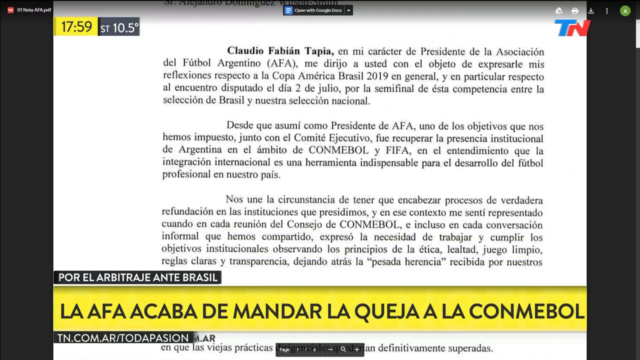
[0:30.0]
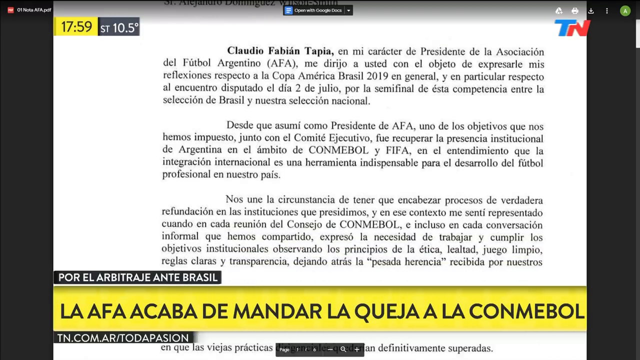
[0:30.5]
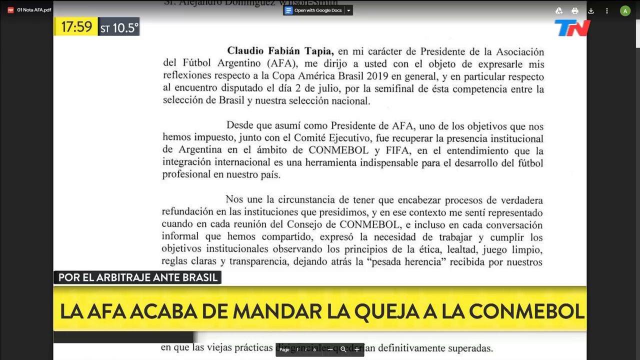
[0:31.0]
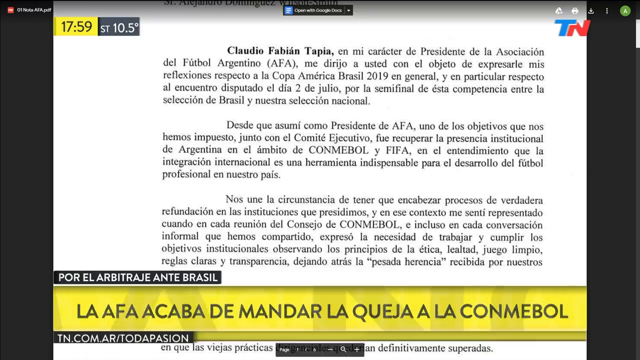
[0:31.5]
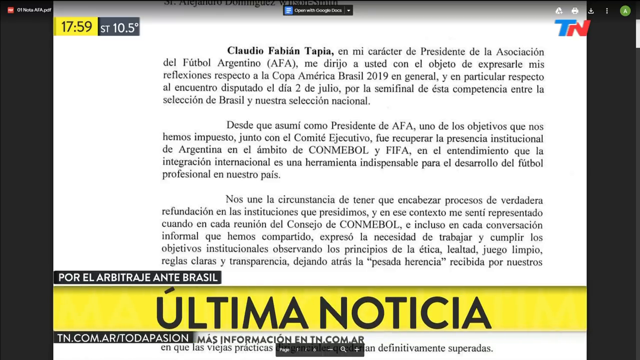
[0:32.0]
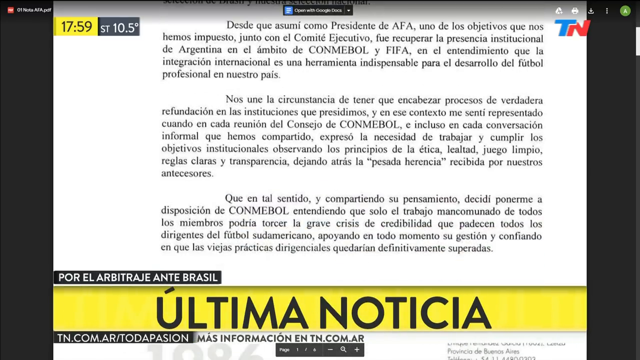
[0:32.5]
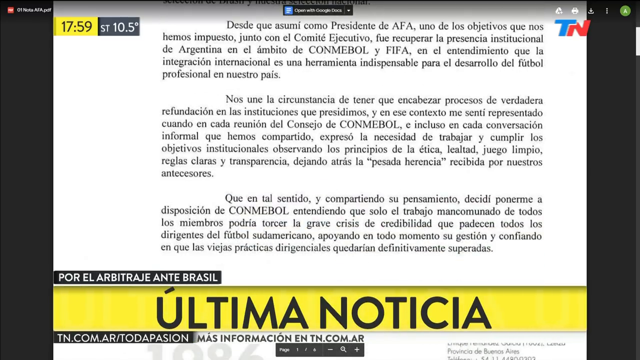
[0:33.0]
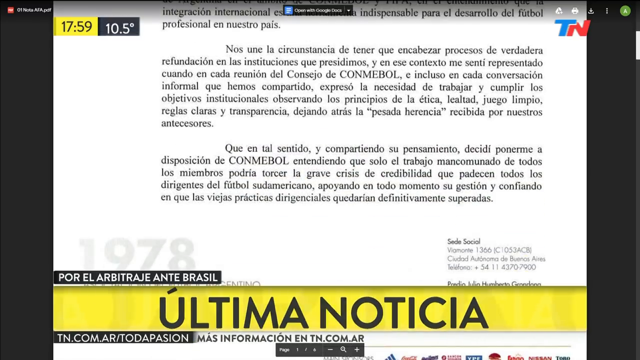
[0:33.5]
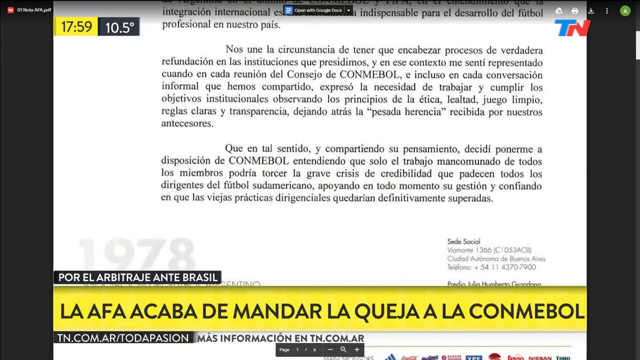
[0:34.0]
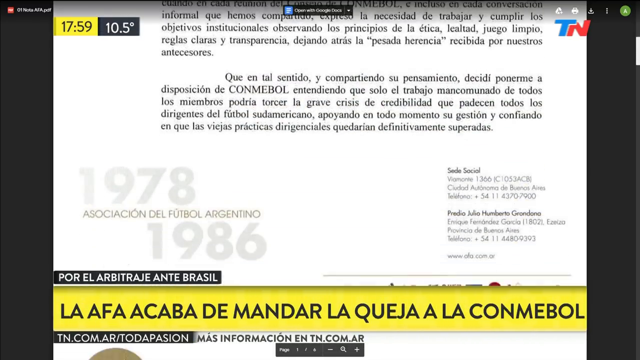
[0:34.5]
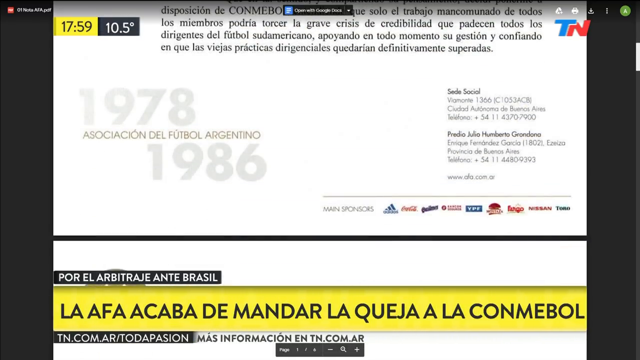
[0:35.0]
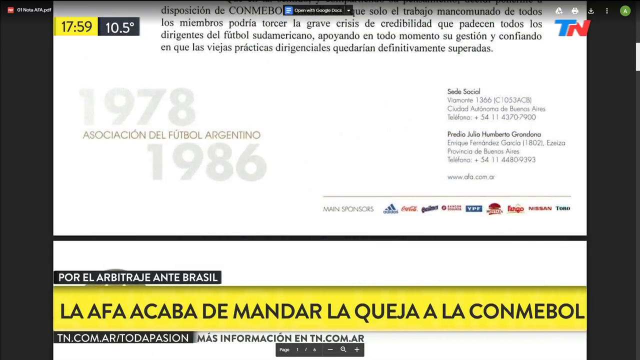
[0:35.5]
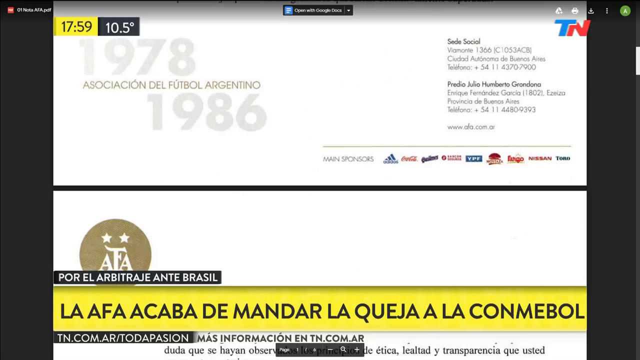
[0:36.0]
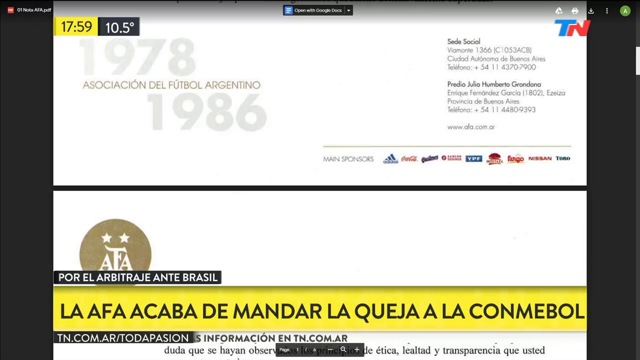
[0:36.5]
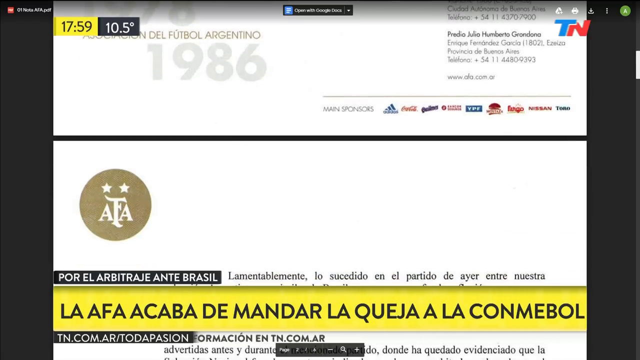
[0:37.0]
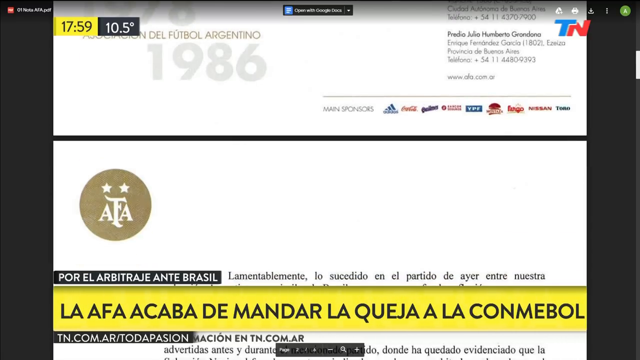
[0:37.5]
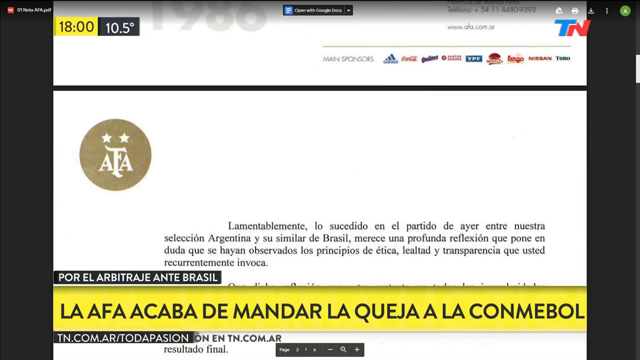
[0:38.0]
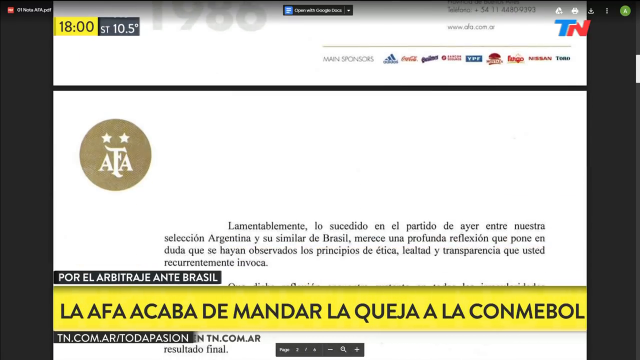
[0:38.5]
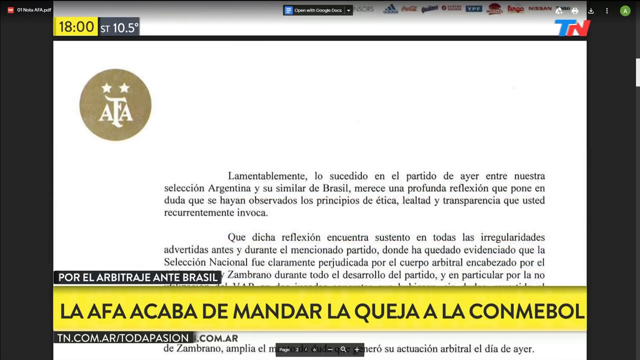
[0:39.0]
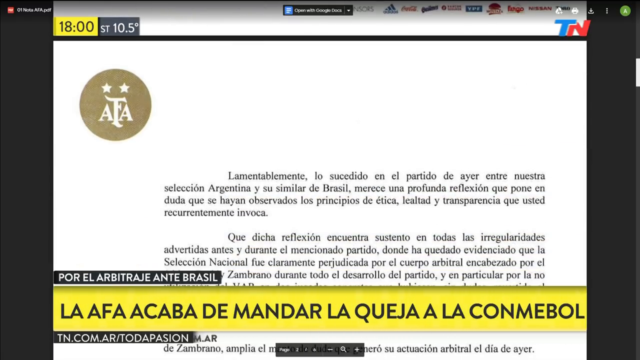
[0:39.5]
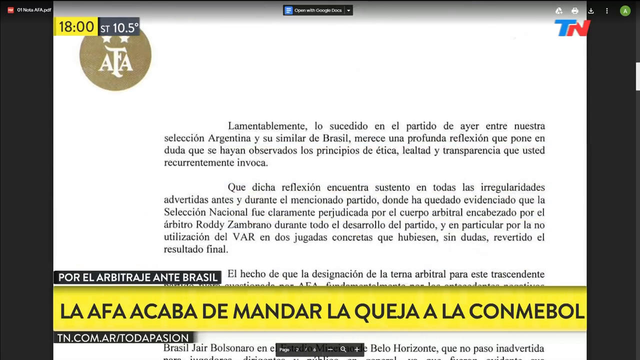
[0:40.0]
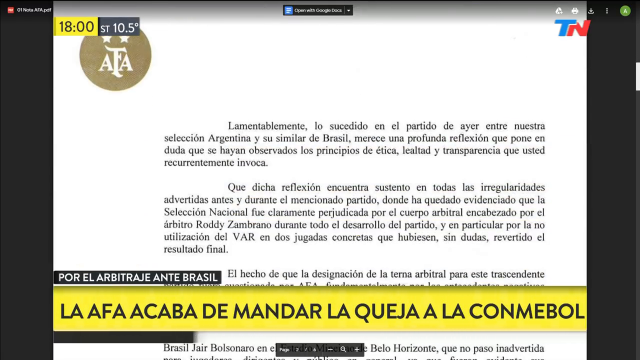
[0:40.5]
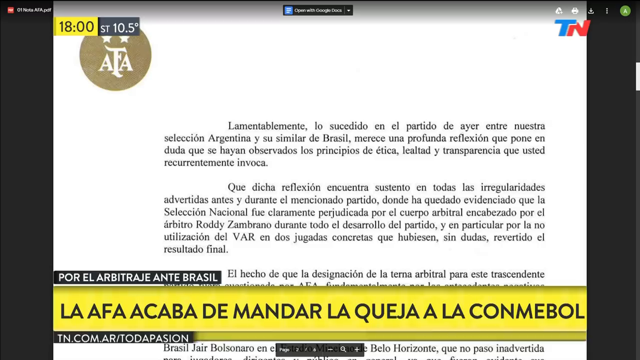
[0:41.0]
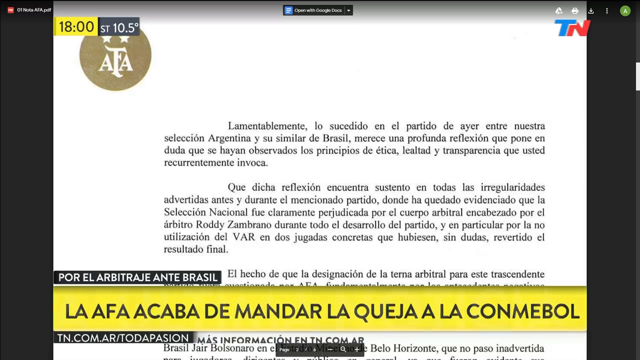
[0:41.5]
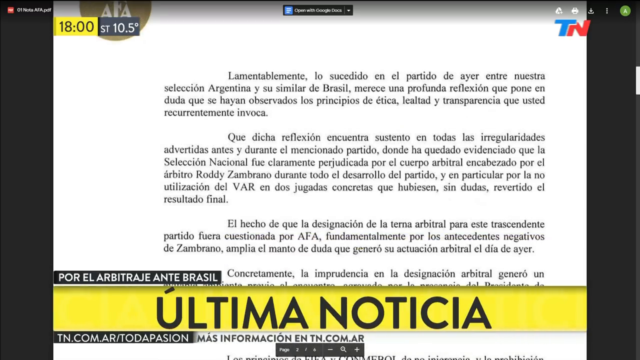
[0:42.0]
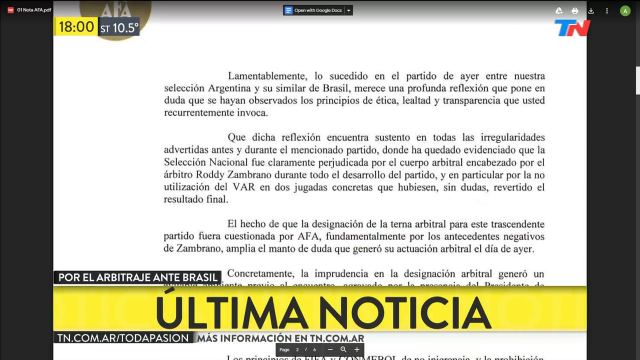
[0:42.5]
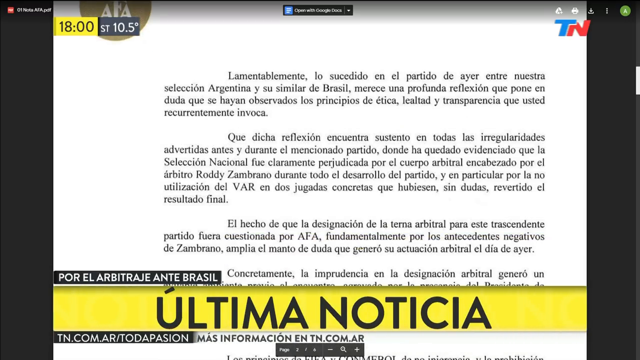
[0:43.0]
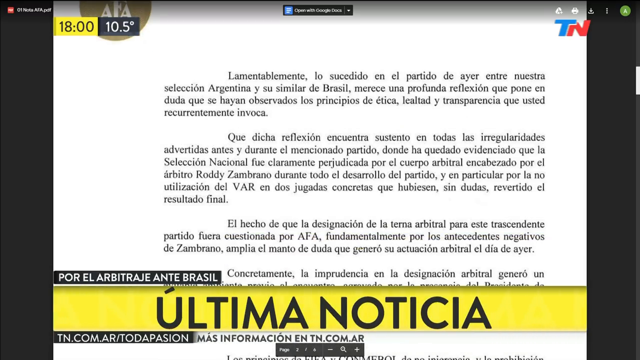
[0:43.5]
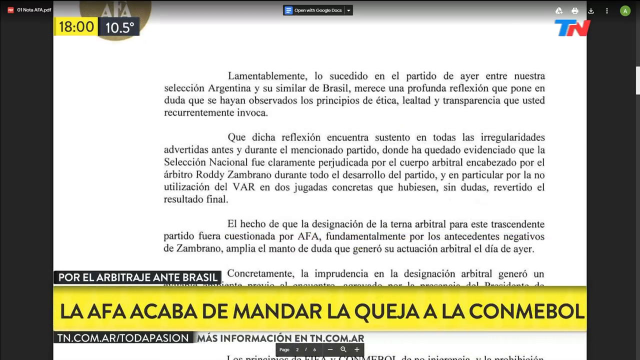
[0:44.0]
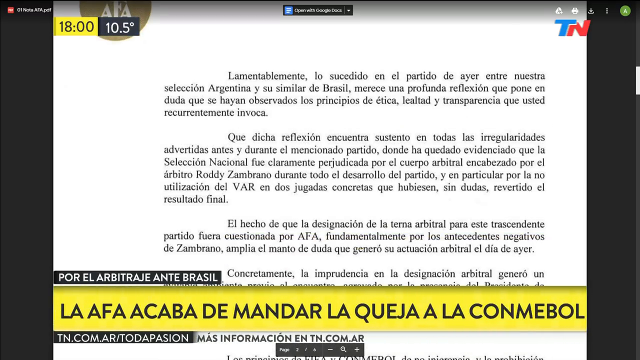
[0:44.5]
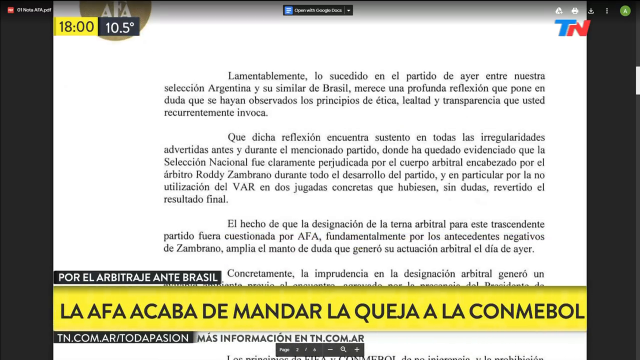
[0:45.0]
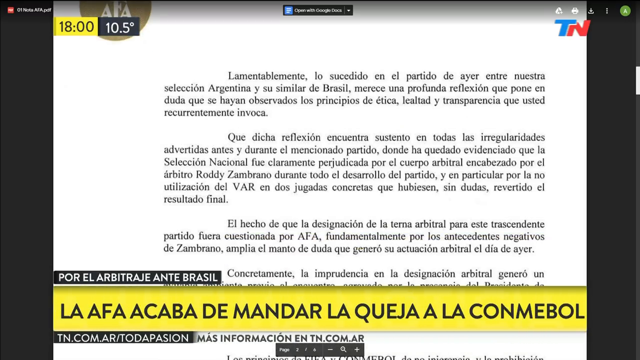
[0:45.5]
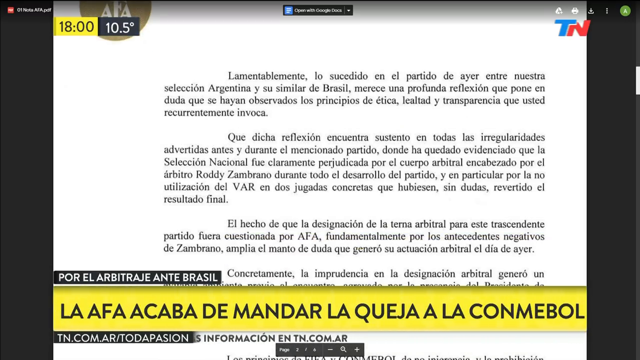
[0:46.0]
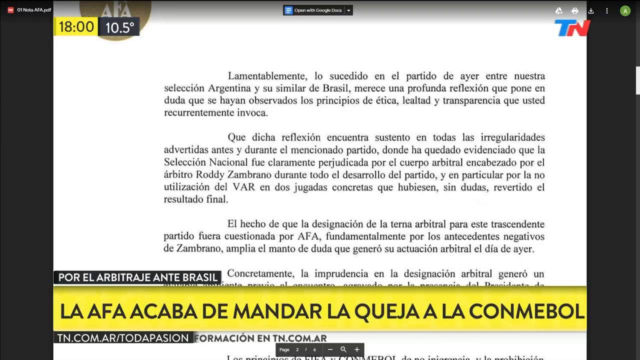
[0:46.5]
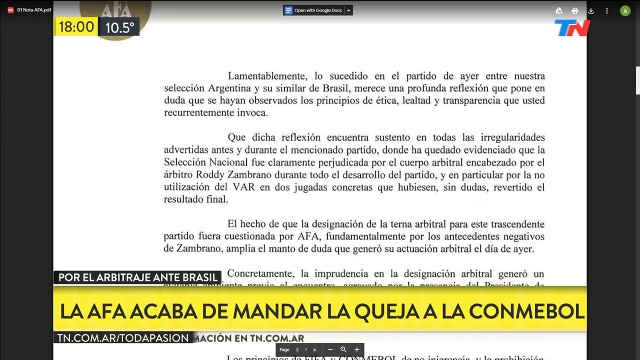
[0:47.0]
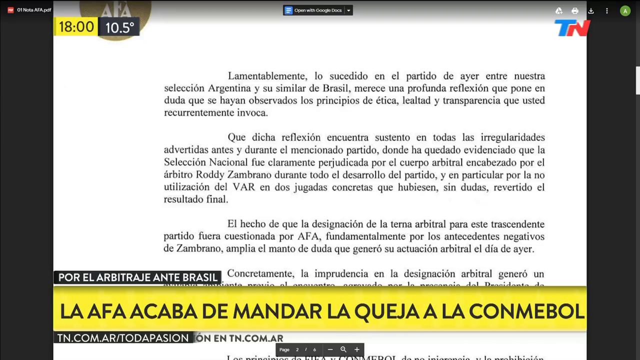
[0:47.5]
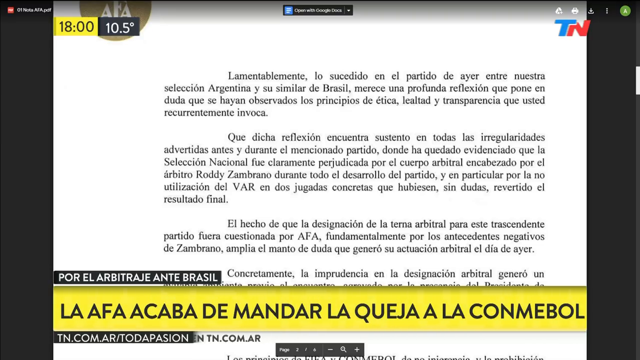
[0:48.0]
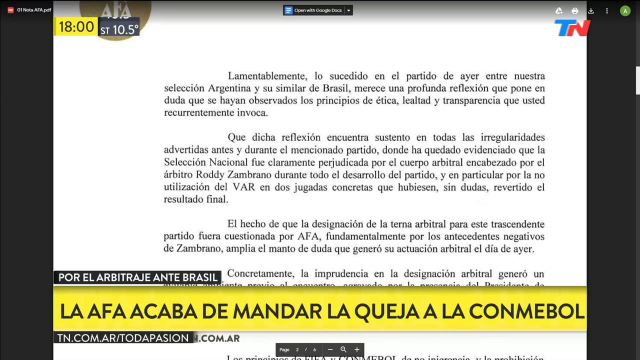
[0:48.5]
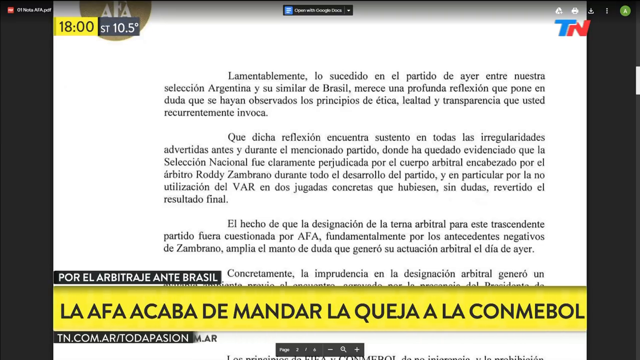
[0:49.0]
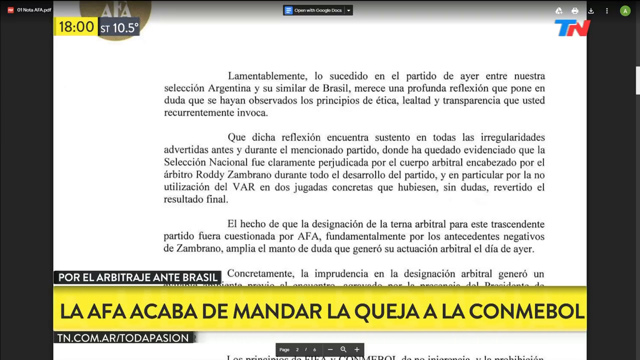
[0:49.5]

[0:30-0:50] The user scrolls down through a number of pages of black text on a white, paper-colored background. A caption appears on the screen in a gold bar reading "Ultima Noticia." The text is in Portuguese and mentions AFA, and it apparently refers to Brazil.